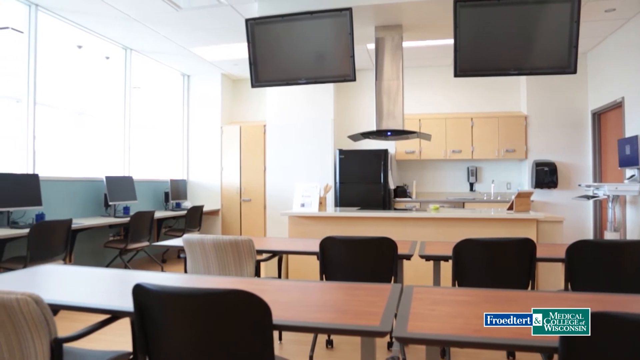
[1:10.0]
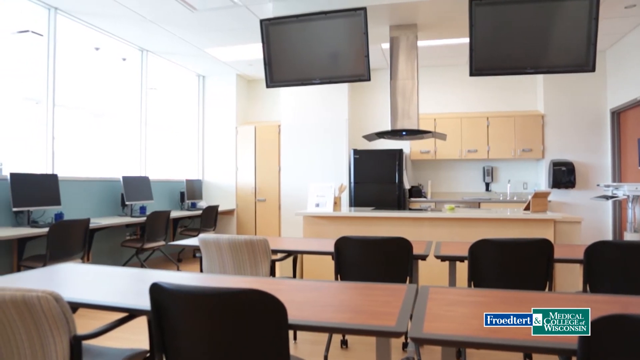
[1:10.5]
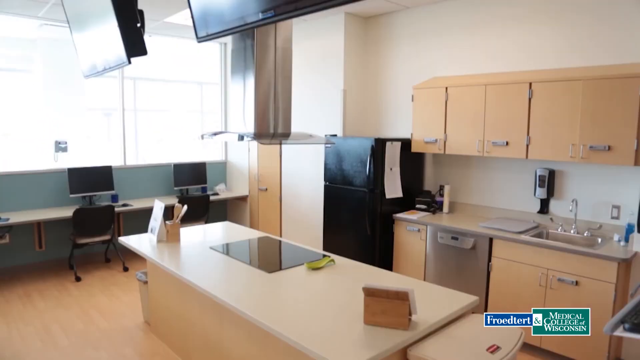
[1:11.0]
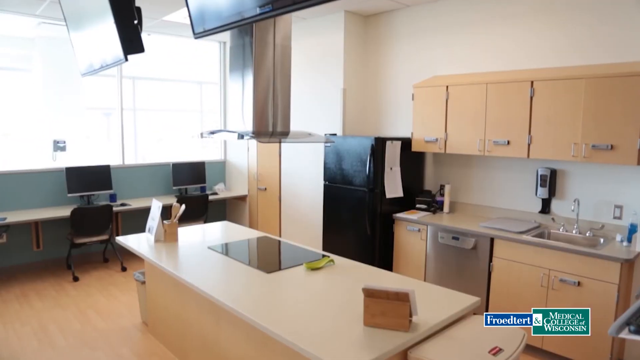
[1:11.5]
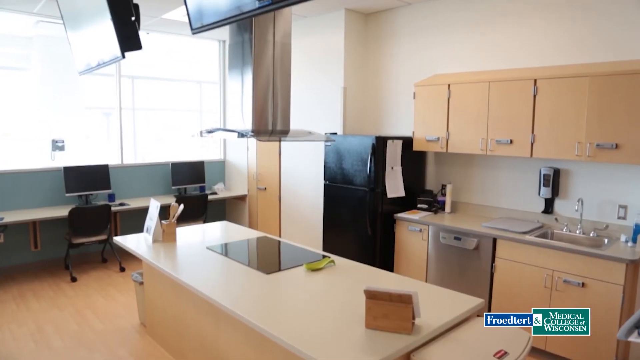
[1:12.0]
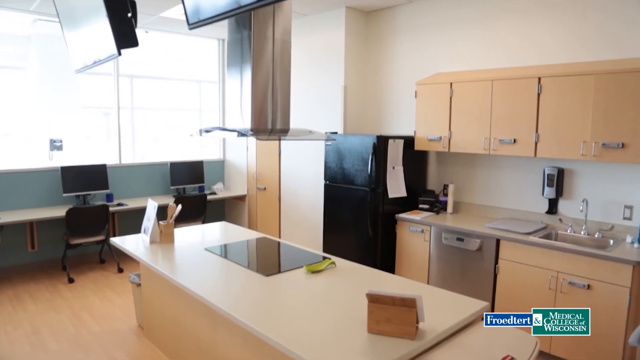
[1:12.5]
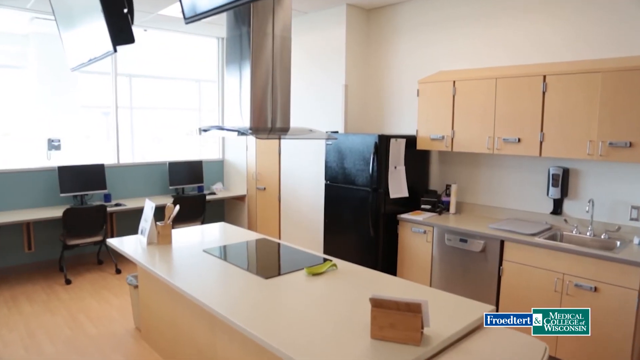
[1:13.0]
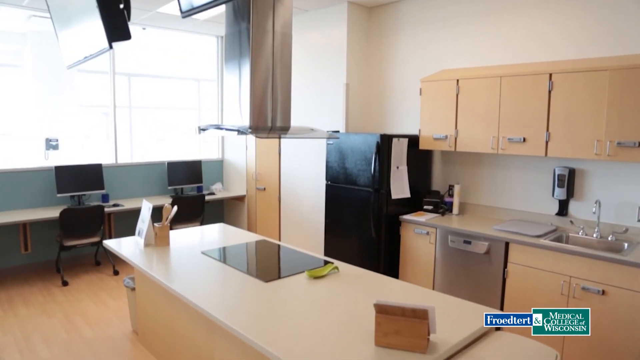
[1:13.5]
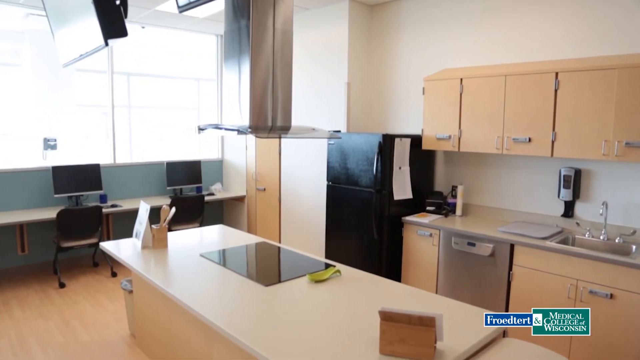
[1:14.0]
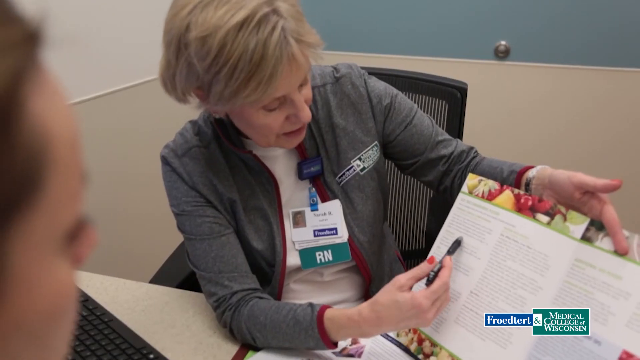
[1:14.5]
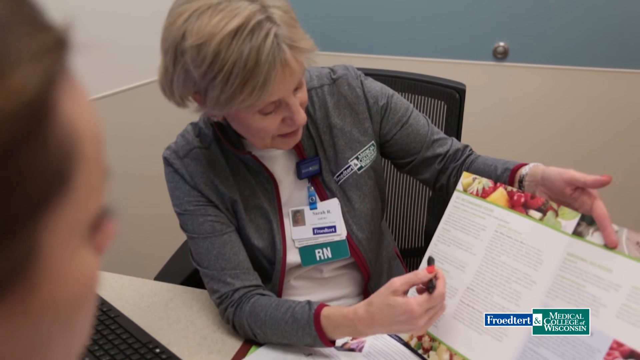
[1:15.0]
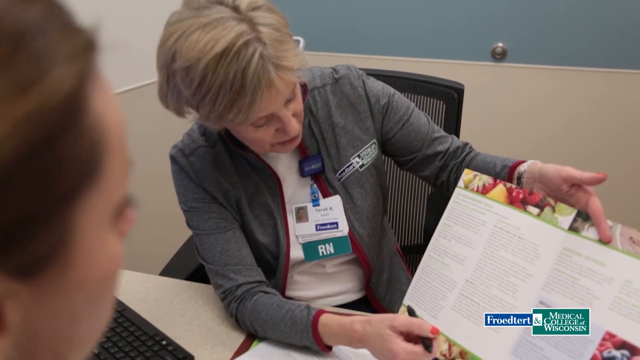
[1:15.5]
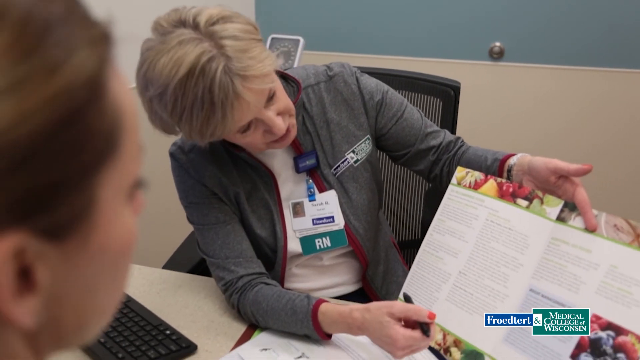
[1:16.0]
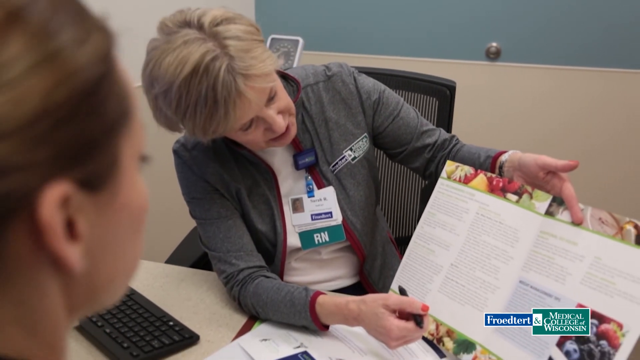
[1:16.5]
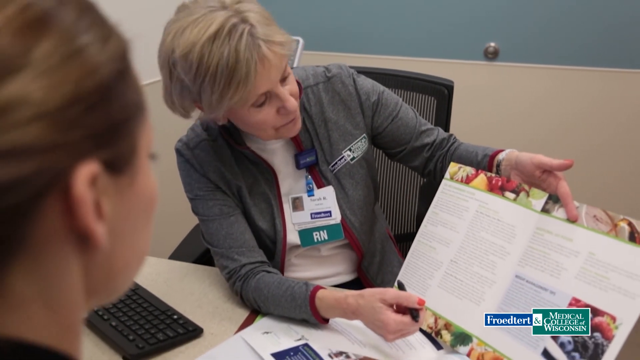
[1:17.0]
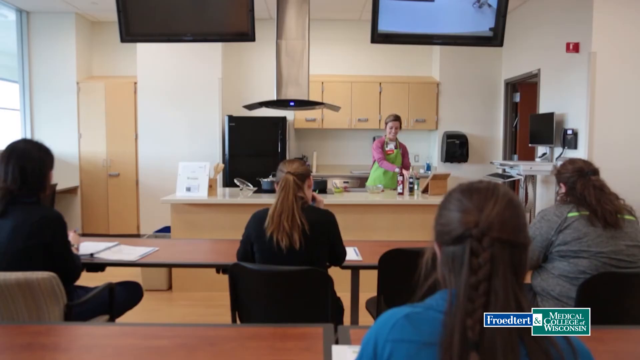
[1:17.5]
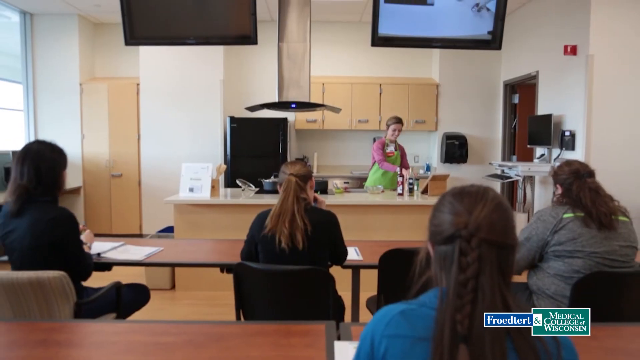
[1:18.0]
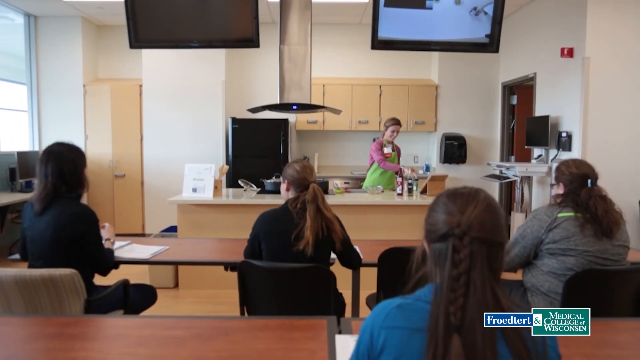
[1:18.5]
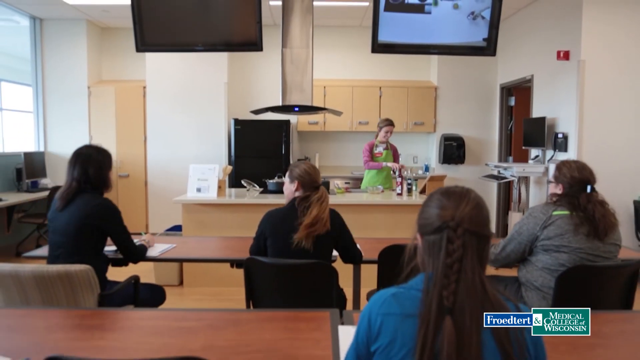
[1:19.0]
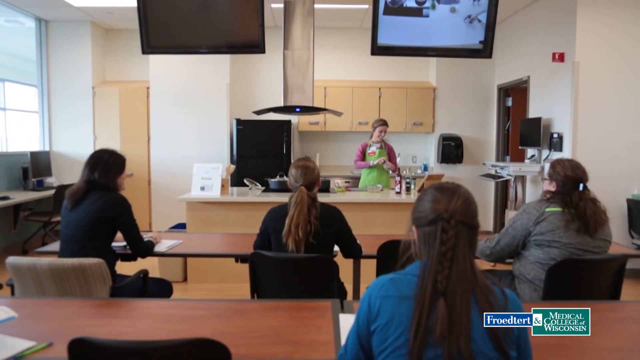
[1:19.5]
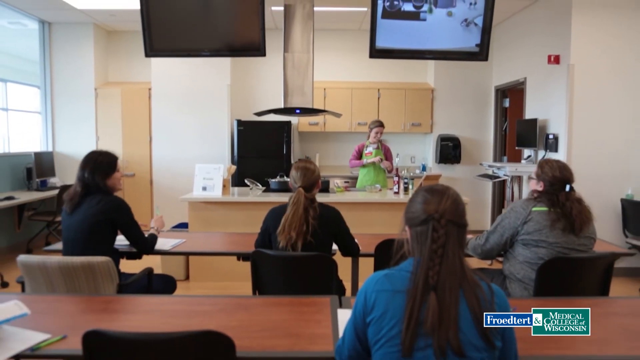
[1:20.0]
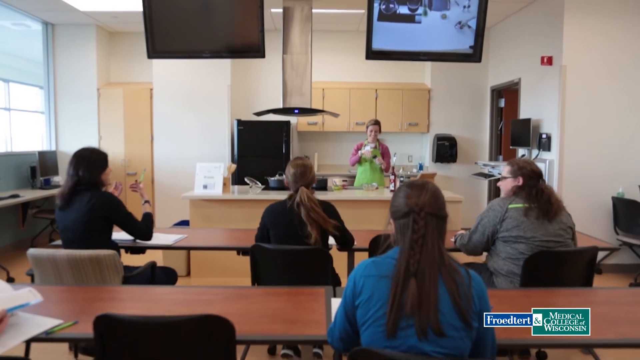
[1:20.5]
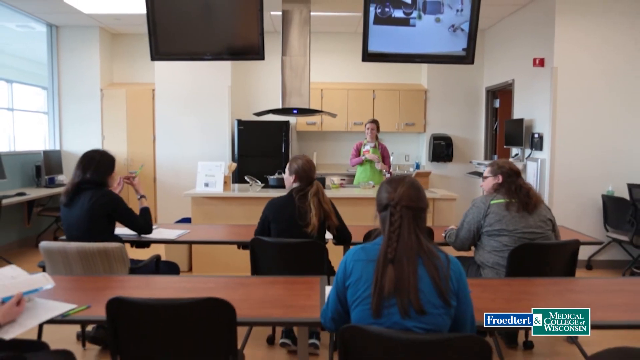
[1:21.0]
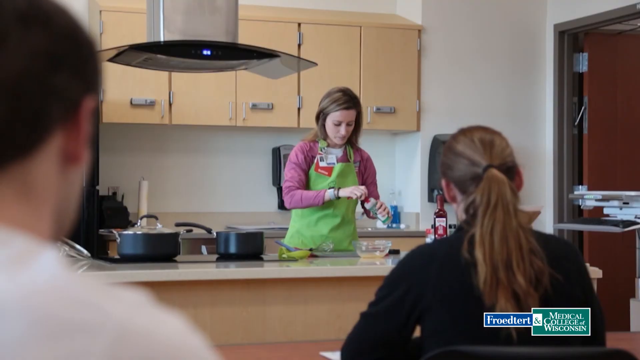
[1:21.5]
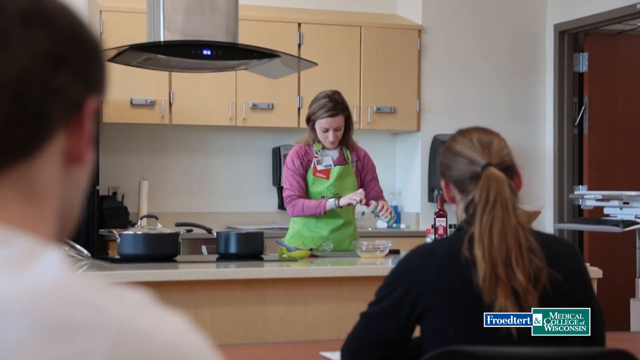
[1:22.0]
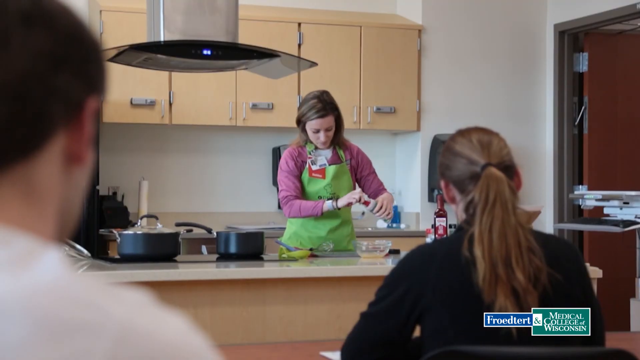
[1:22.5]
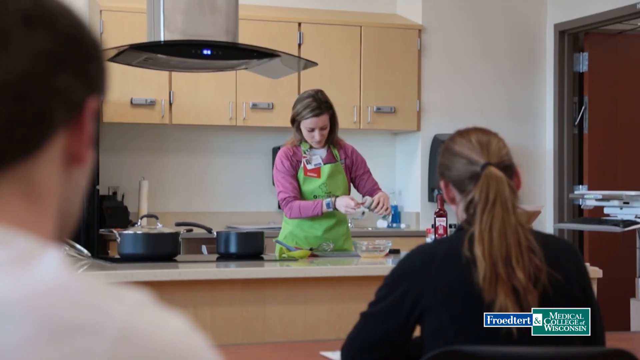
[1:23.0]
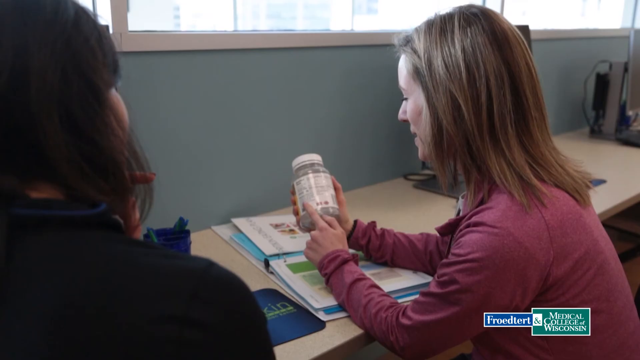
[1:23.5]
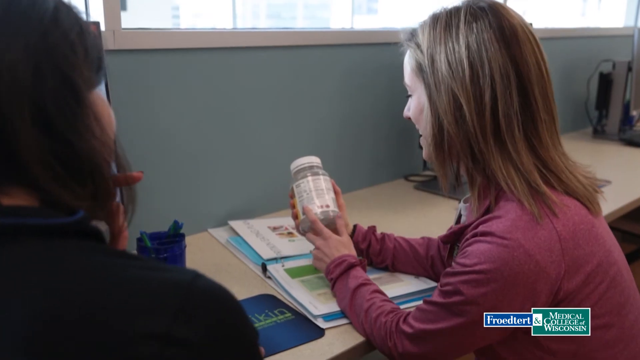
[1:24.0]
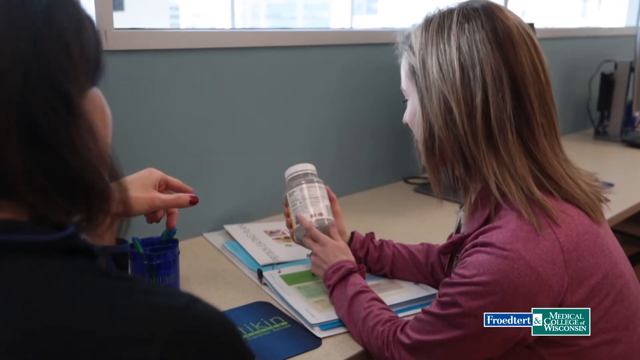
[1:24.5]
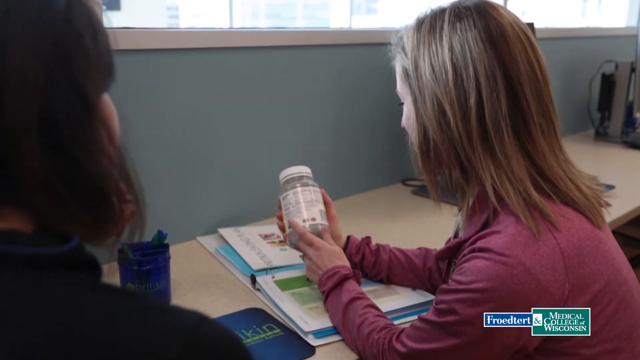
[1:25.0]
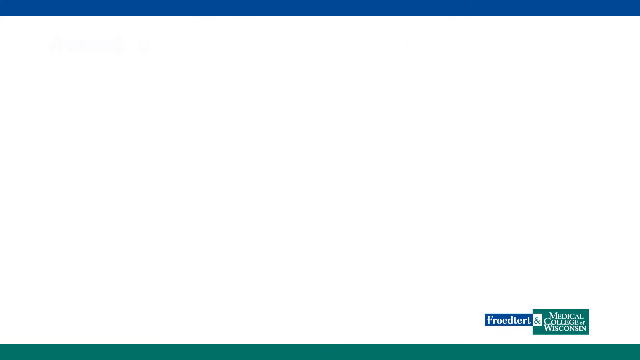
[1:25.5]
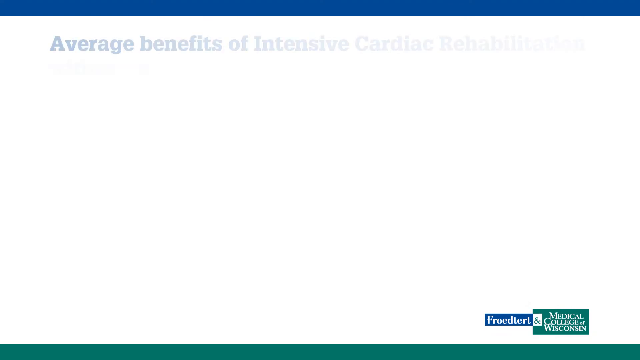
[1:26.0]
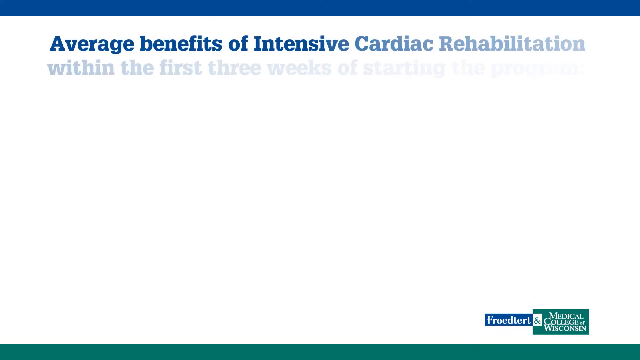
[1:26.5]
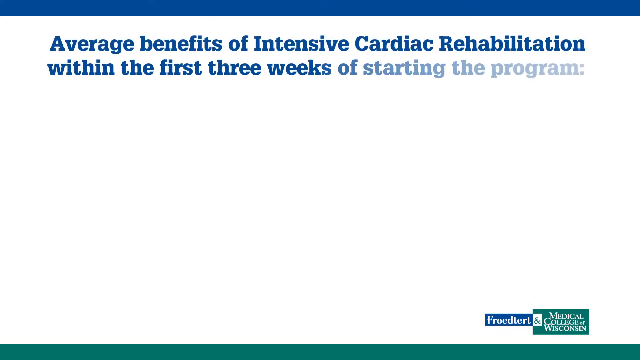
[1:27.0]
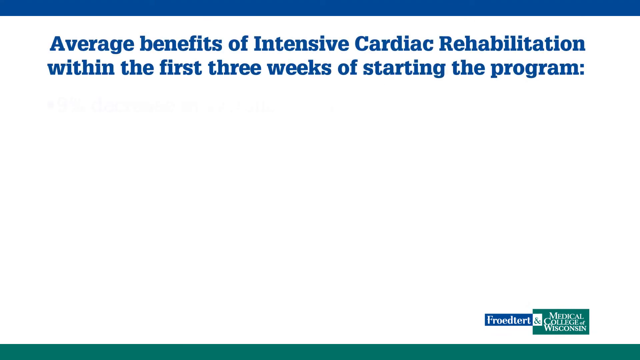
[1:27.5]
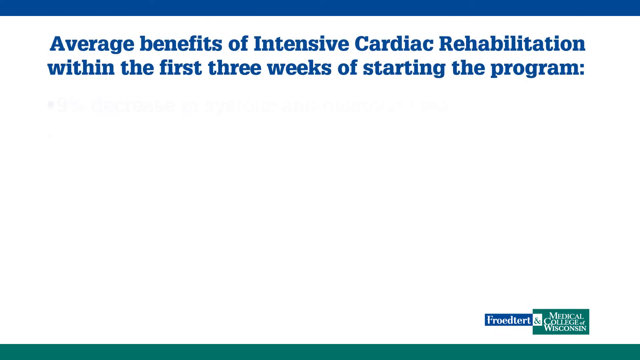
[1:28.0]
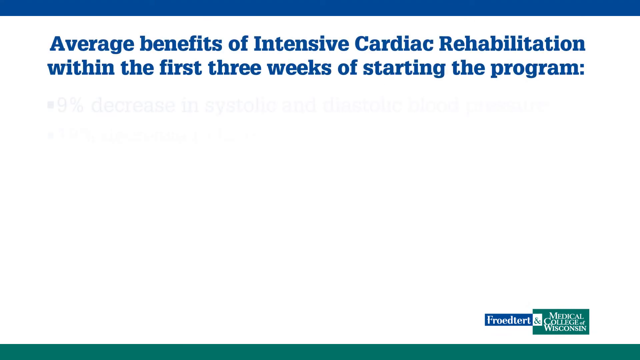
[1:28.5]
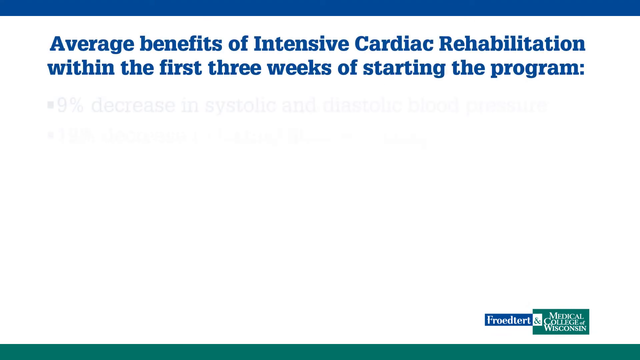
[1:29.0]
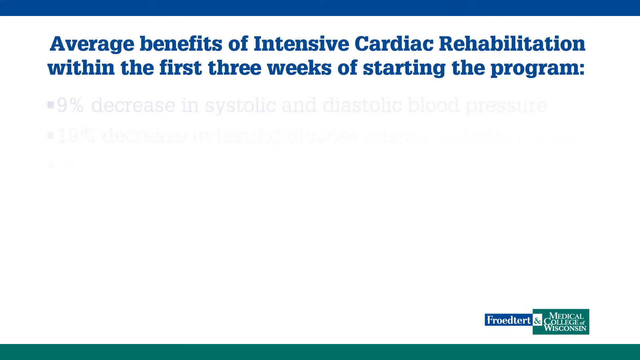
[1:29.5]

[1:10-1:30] A medical common area appears, with about seven chairs. A dark brown folding table is directly in front of the camera with five chairs, and off to the left are a couple of office desks with desktop computer screens and chairs that go underneath the cabinet. A long wall is lined with dark wooden cabinets, and in the back is a small kitchenette with a countertop, a cooktop, a sink, a dishwasher, about six cabinets, and what appear to be two refrigerators. A woman wearing a badge with a registered nurse logo explains a pamphlet to another woman.